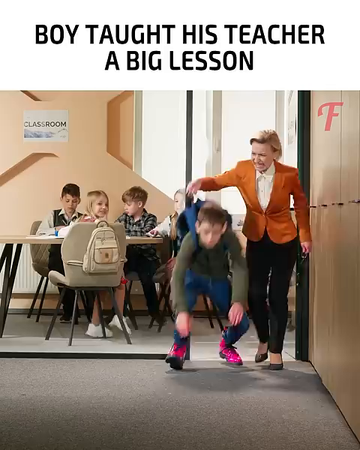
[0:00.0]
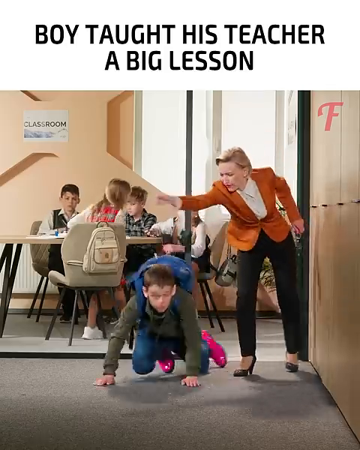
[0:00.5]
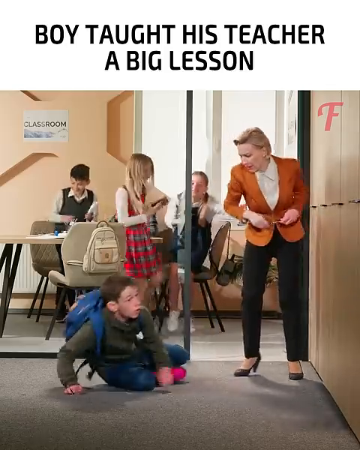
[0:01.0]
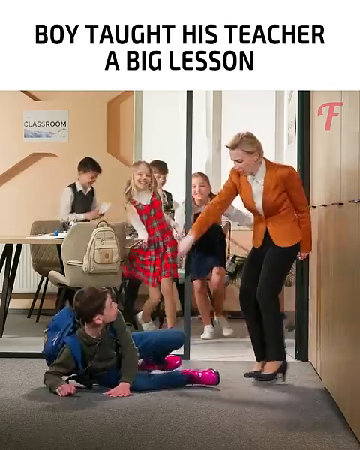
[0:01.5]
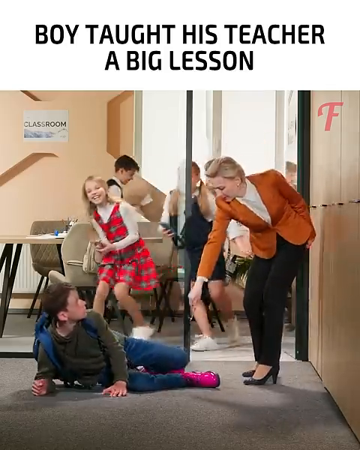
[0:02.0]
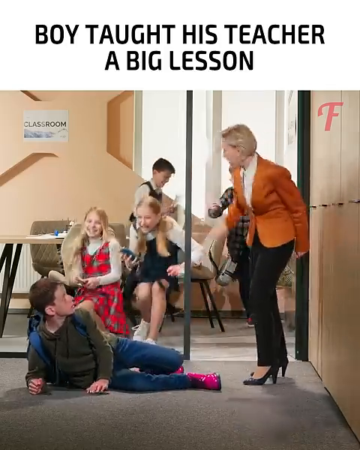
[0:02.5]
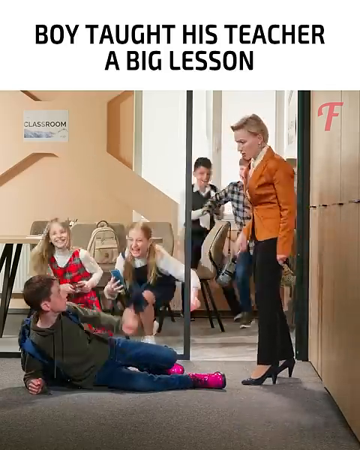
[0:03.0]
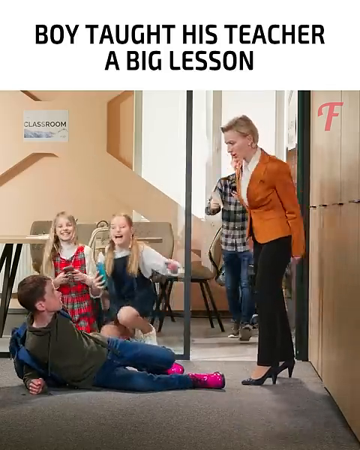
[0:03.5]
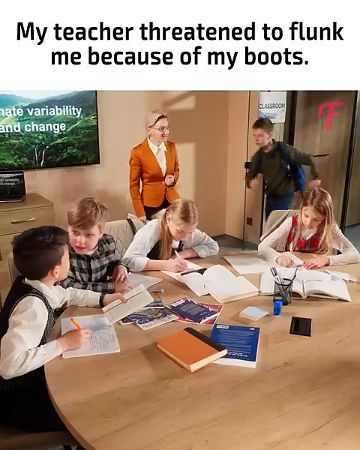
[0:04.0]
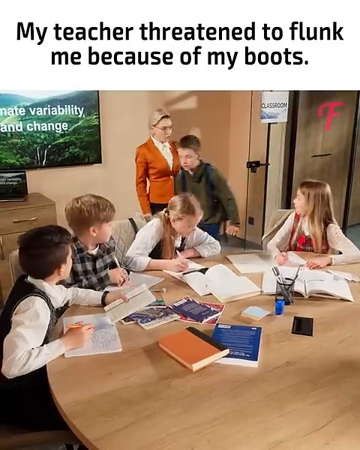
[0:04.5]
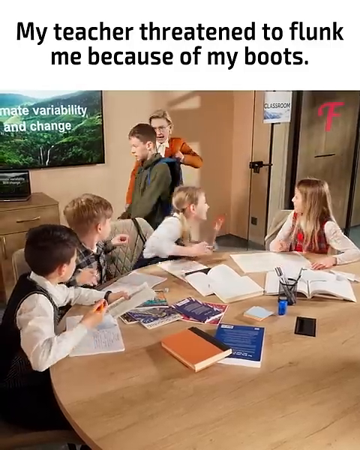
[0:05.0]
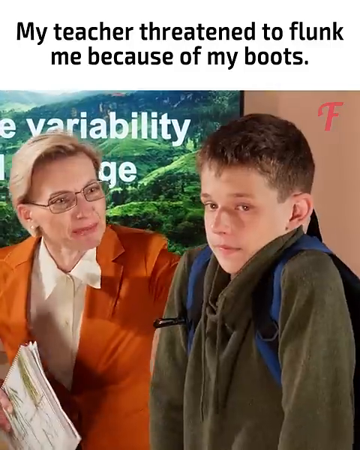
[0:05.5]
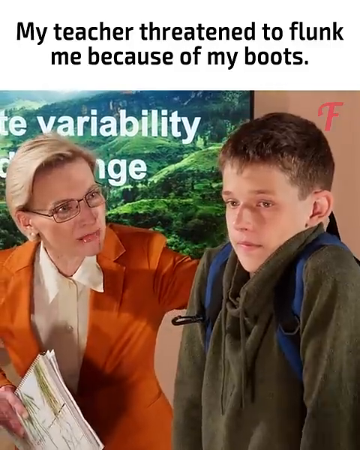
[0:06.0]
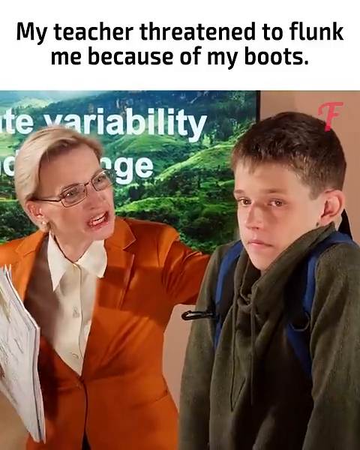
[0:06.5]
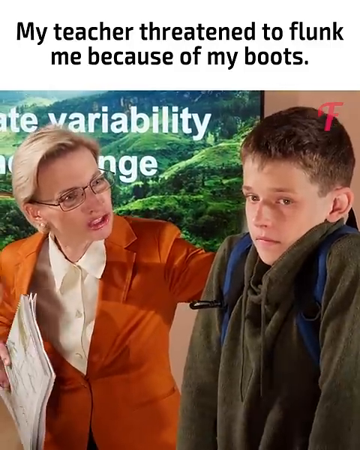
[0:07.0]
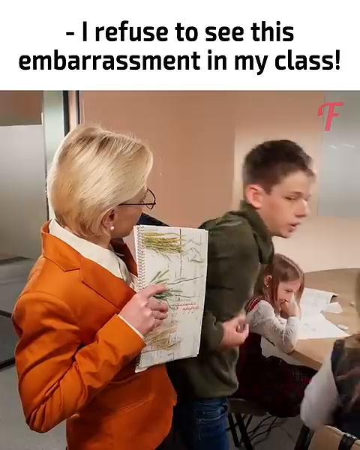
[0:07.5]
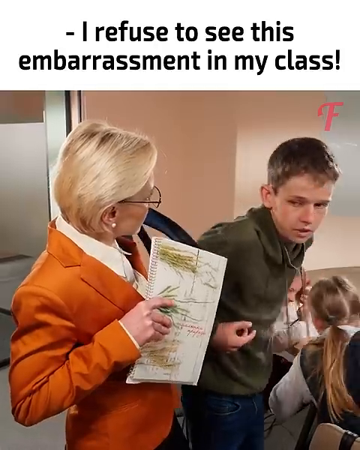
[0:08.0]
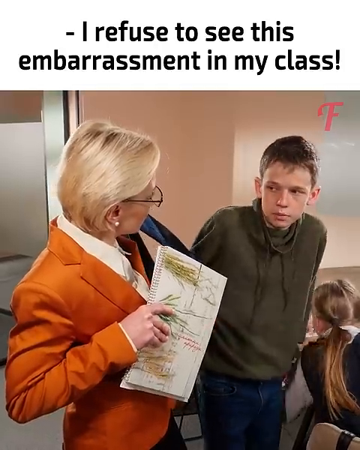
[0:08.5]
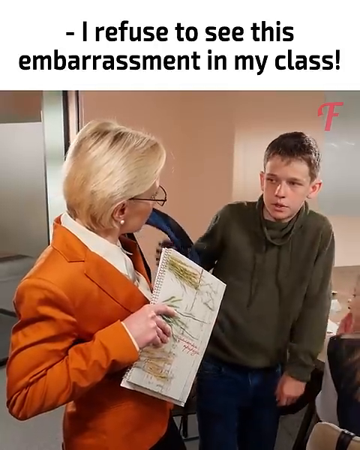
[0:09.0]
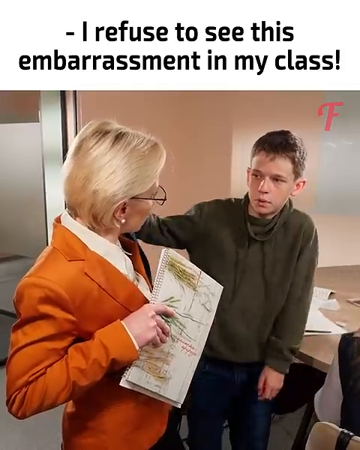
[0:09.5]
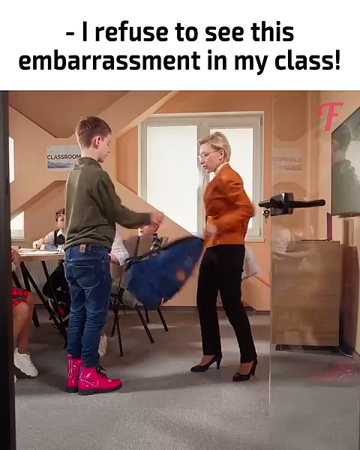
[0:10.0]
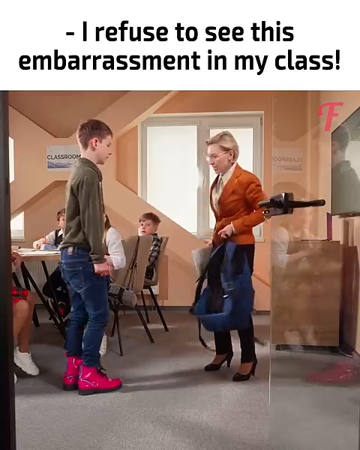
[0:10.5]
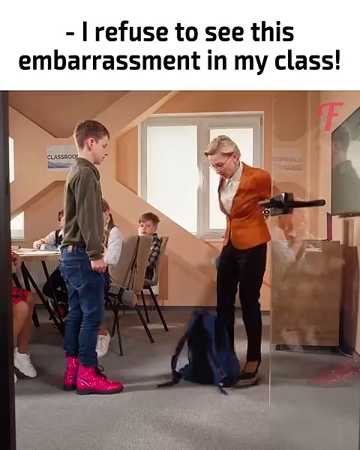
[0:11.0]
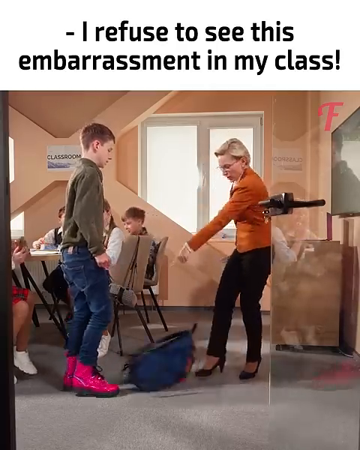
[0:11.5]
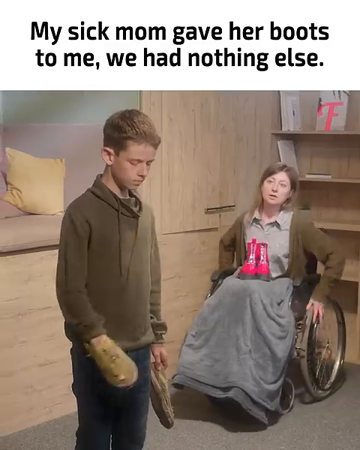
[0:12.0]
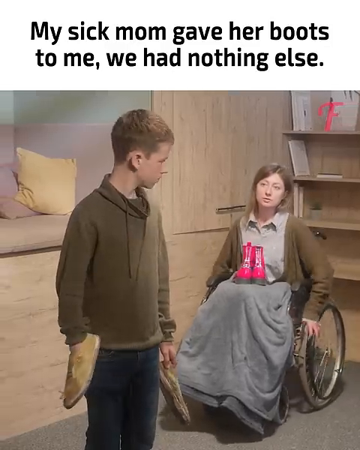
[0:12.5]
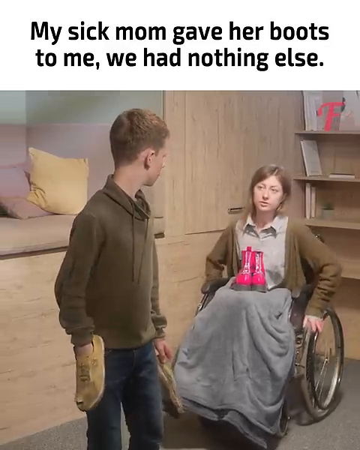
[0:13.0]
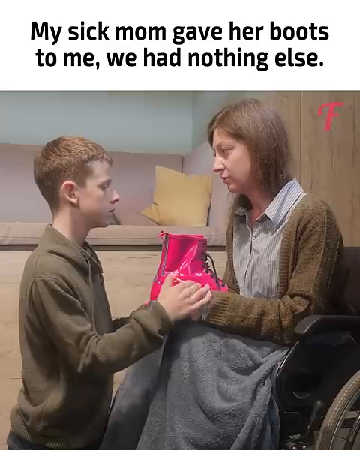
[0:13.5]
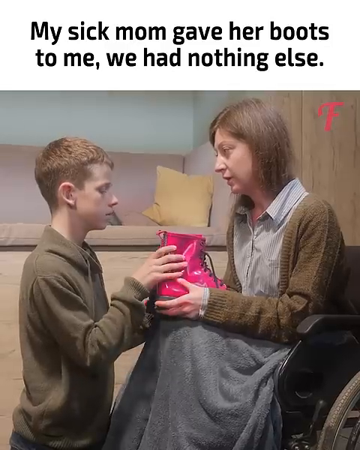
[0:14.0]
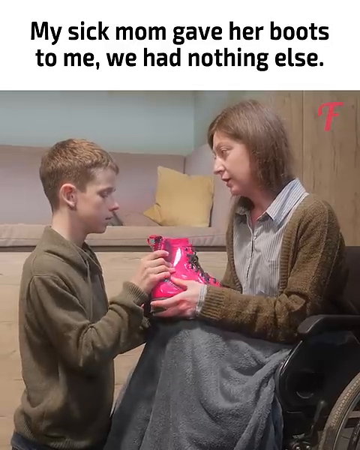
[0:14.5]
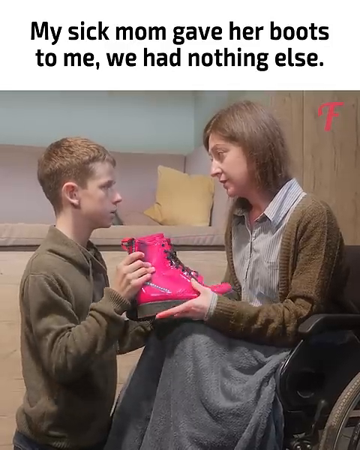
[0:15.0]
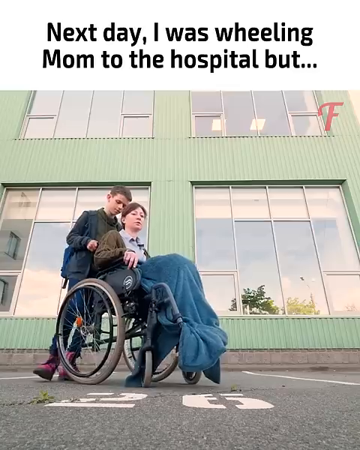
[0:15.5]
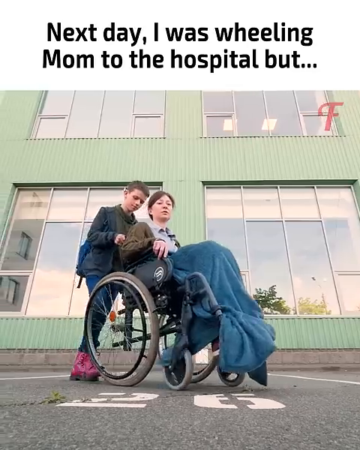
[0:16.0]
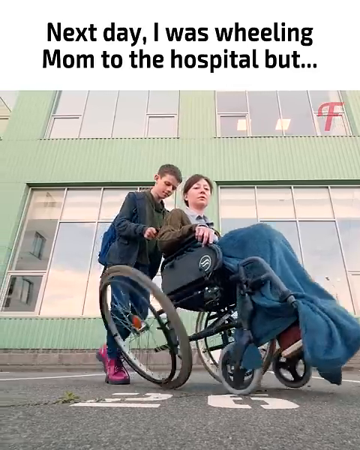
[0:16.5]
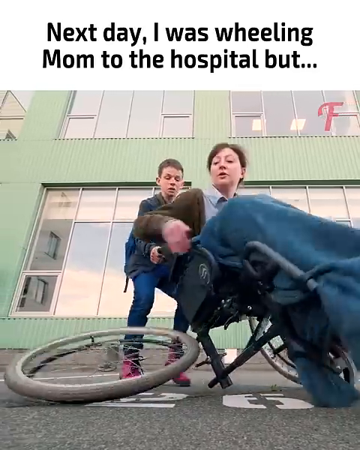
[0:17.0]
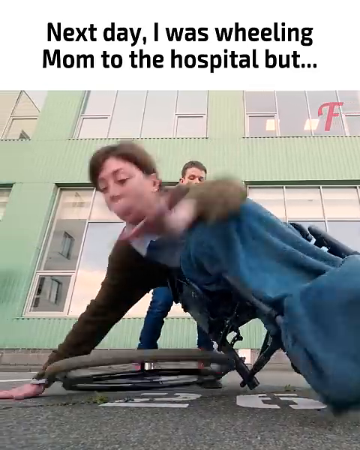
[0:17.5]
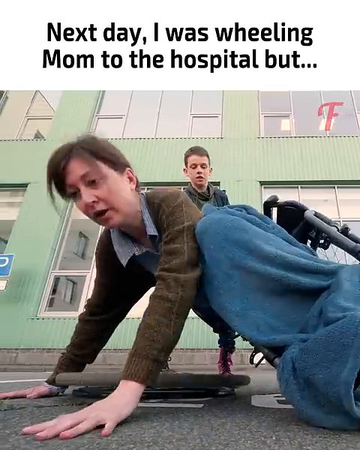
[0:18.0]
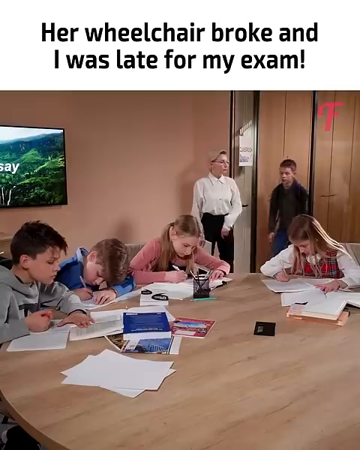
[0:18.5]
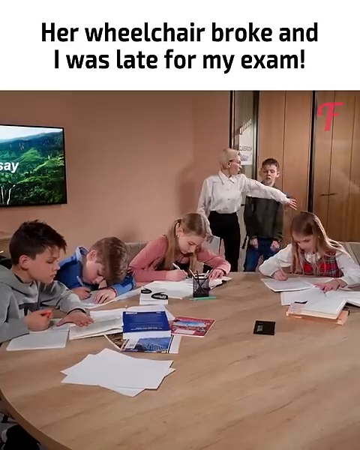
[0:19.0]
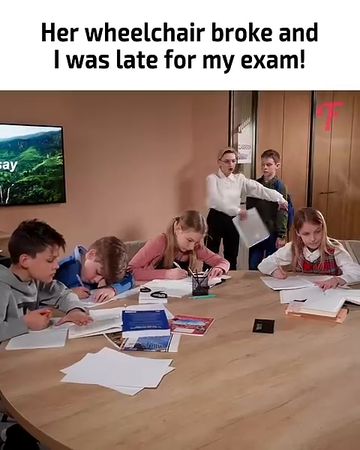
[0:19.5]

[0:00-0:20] Text at the top of the screen reads "boy taught his teacher a big lesson." The setting is some sort of classroom that looks like a mix of old and new periods of time. A woman wears an orange blazer coat with a white dress shirt, slacks and heels, and has short, dressed-up hair. She throws a young man to the ground, and he looks very shocked; the students on the other side of the classroom come over to look, apparently from behind some sort of glass door. The scene cuts to the kid trying to run into the classroom late while the teacher, looking extremely angry, yells at him and he shies away. She takes off his backpack and kicks it. Another cut shows a woman in a wheelchair, possibly his mom, who brings a pair of pink boots over to him. He takes them and, wearing the pink boots, rolls the woman in the wheelchair outside of his house. One of the wheelchair's wheels falls off. The scene flashes back to the classroom, where four students are already working and the boy apparently comes in late. The woman, now in different clothes, gestures to the classroom.